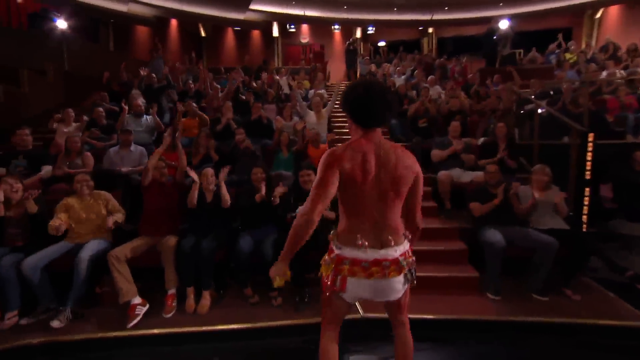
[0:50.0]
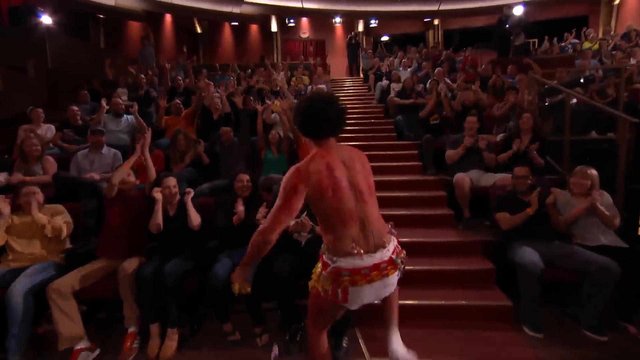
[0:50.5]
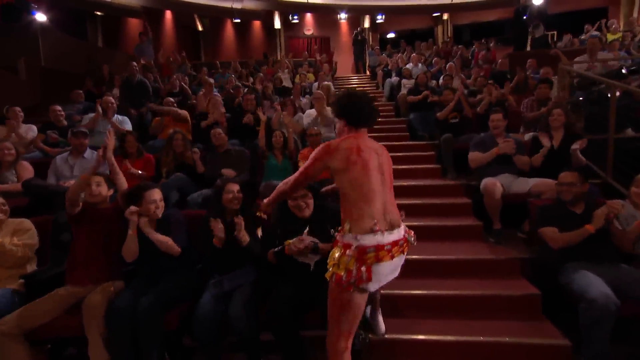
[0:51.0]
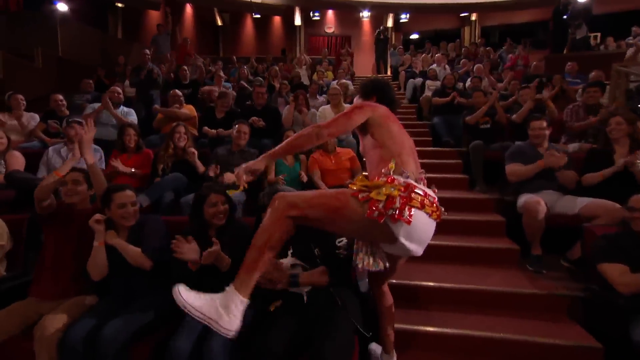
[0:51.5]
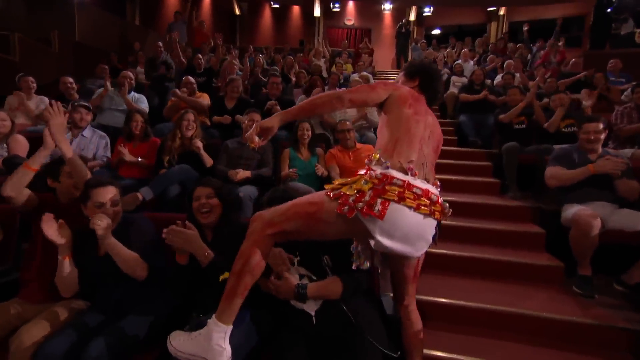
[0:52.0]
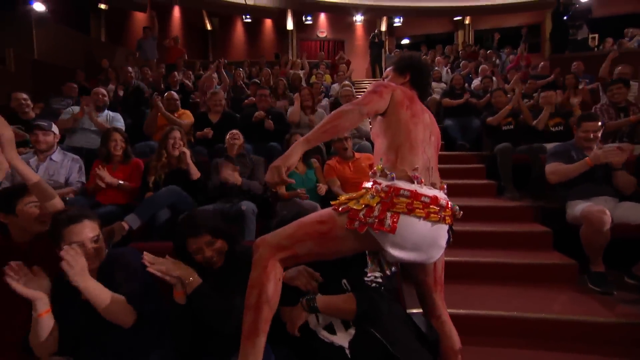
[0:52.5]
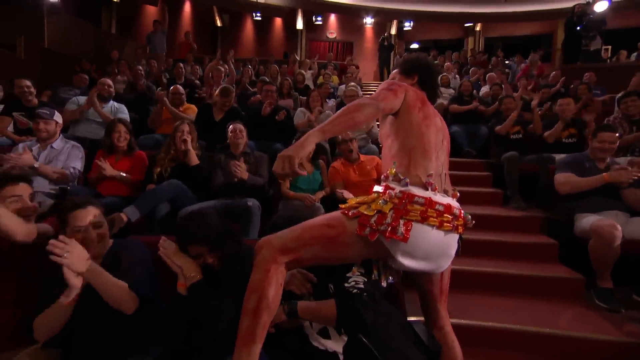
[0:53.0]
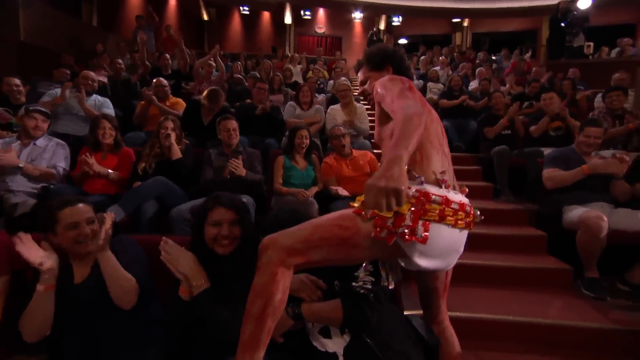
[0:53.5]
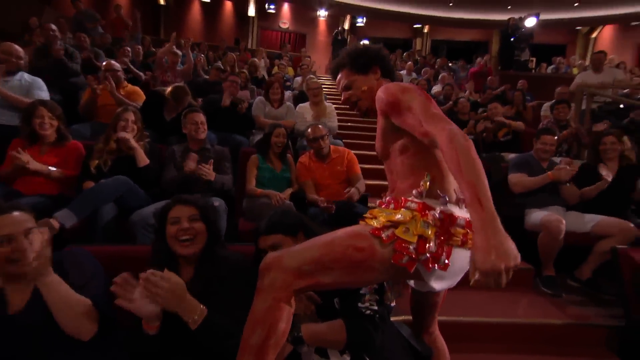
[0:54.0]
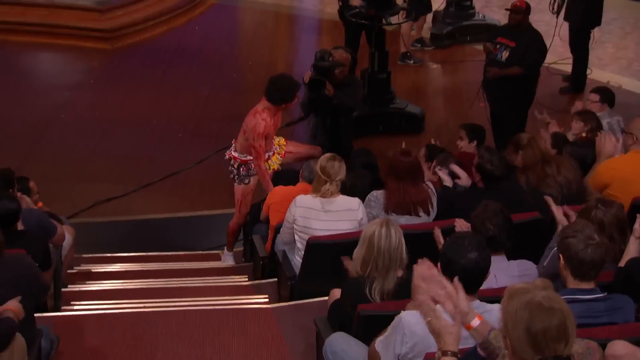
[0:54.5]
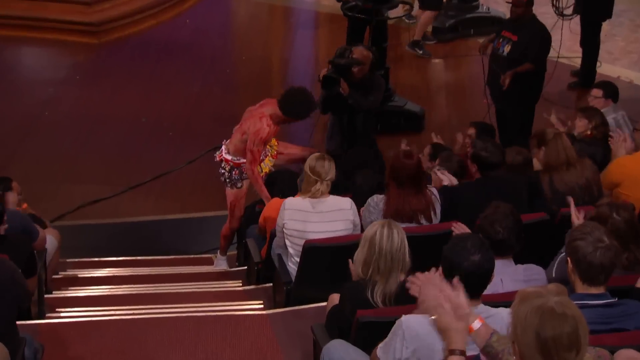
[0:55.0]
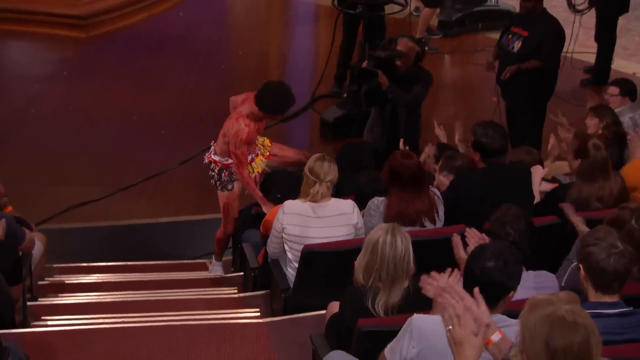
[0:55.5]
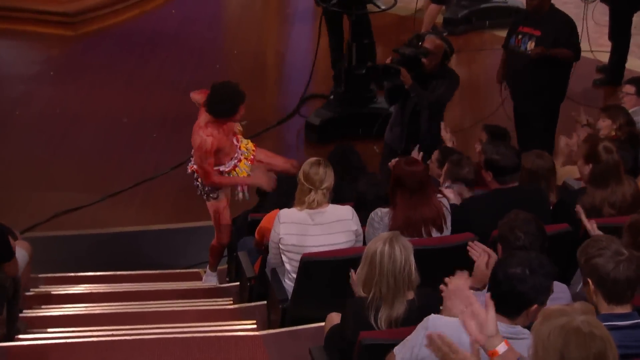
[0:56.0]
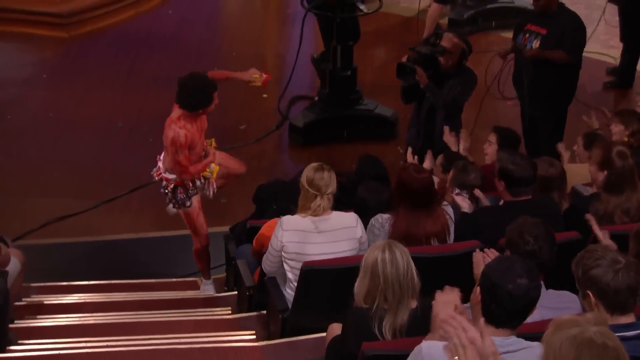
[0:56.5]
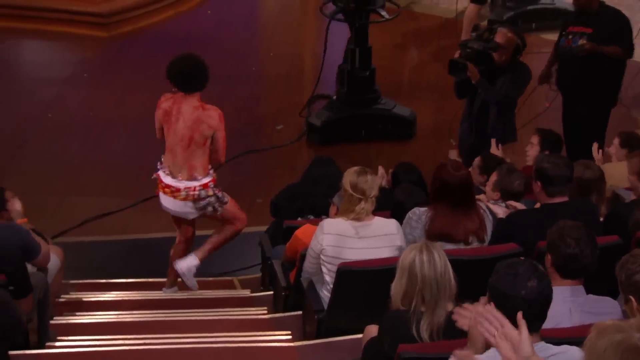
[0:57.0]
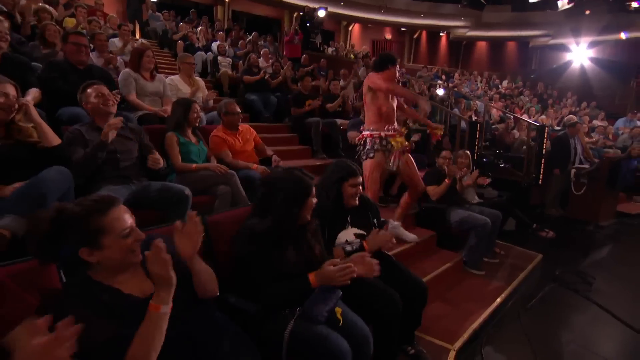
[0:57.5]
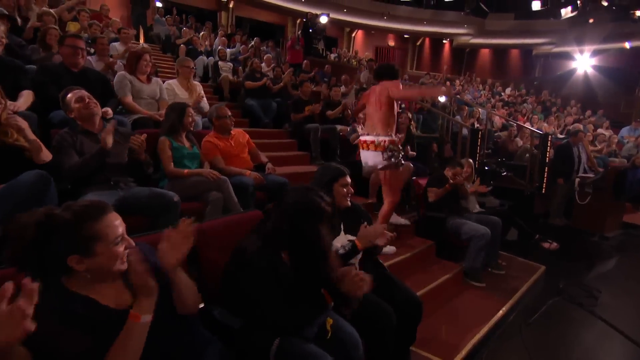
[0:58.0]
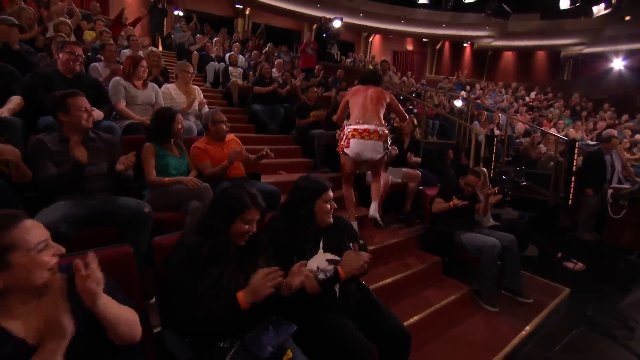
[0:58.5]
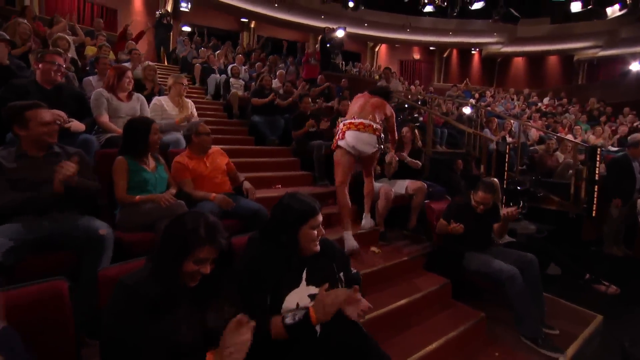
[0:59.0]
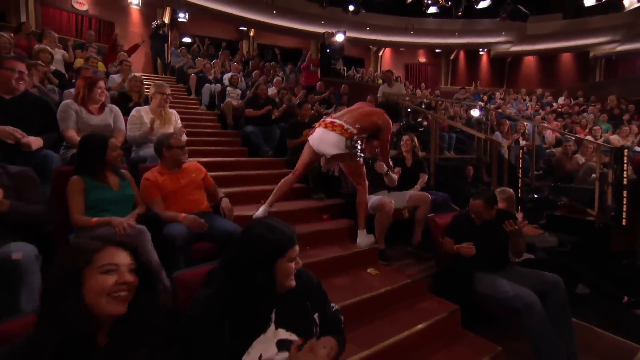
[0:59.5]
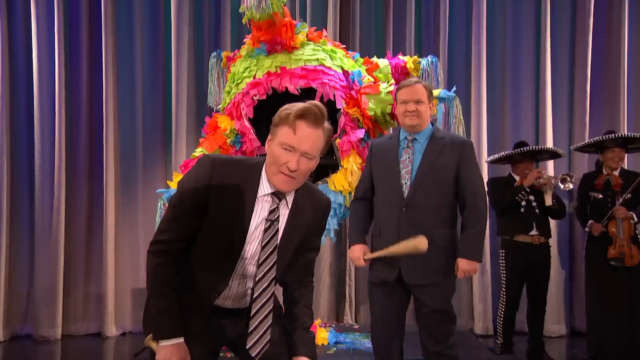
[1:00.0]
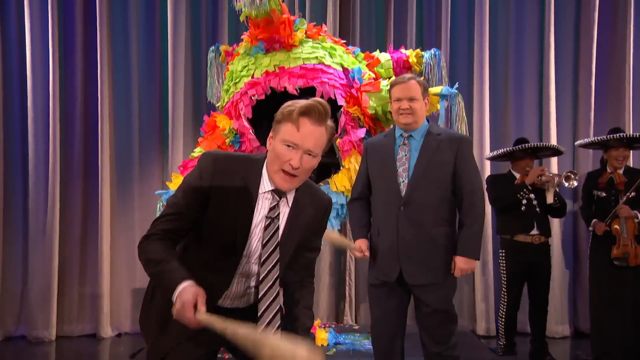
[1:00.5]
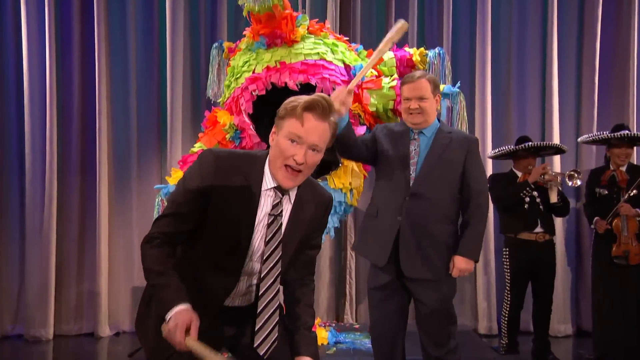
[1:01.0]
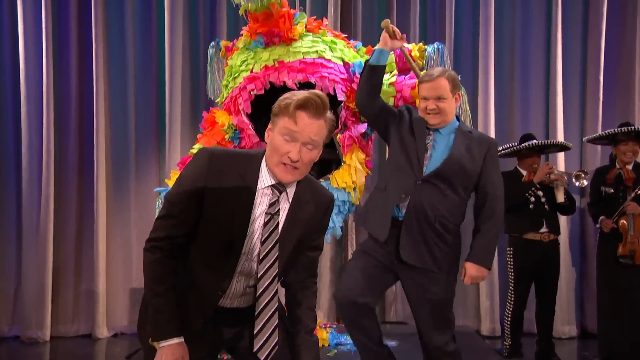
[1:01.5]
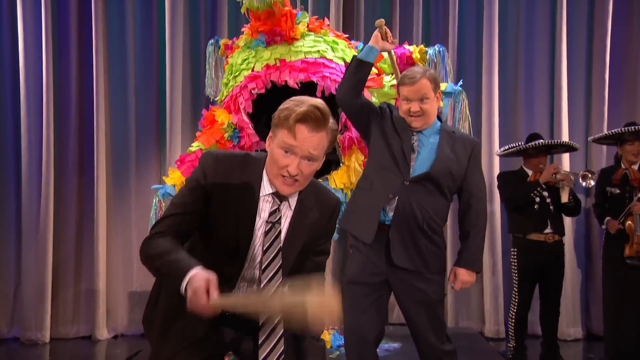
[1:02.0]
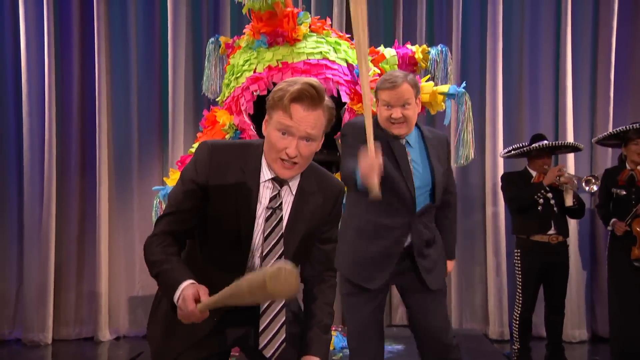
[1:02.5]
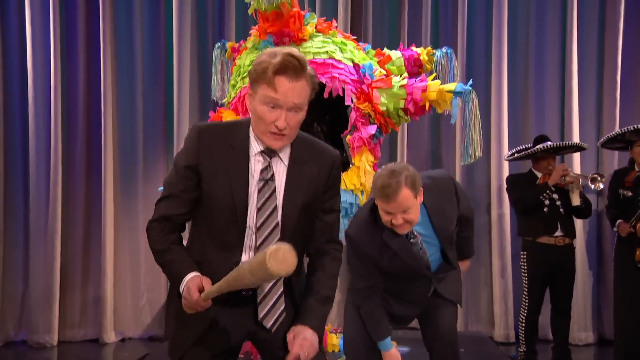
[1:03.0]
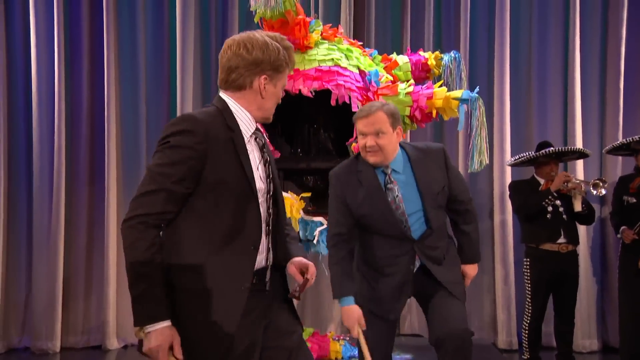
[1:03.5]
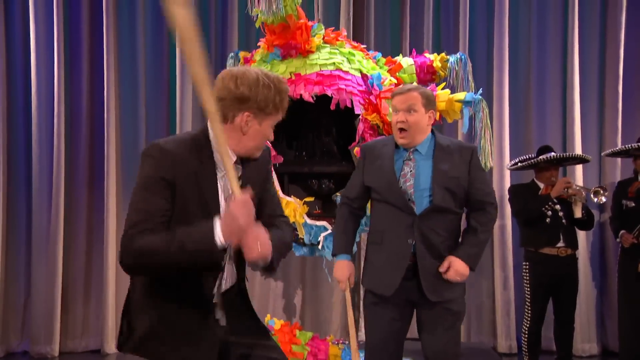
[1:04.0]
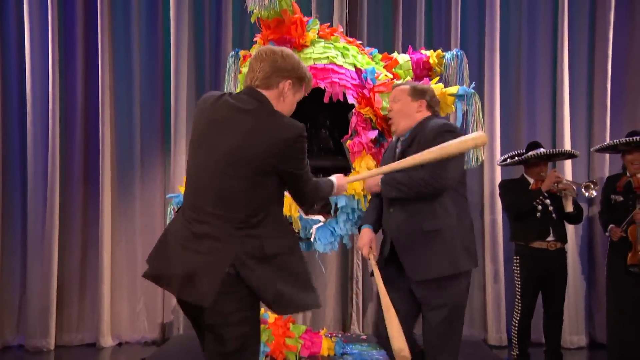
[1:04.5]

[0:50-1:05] The bare-chested man wearing a loincloth made of packs of M&M's begins giving some of the M&M's to audience members. The audience is seated in a dimly lit section of the studio, with a stair running between the two sides of the aisle. Audience members clap and cheer as the half-naked man stands there talking, grabbing M&M's from his loincloth and throwing them into the audience. Next, Conan and the man in the dark blue suit with a blue shirt both have baseball bats. The man in the blue shirt taps Conan from behind with his bat. Conan turns around and swings his own bat at the man in the blue shirt and dark jacket, who seems shocked as Conan swings at him. Conan hits the man, who looks quite shocked by Conan swinging back at him.